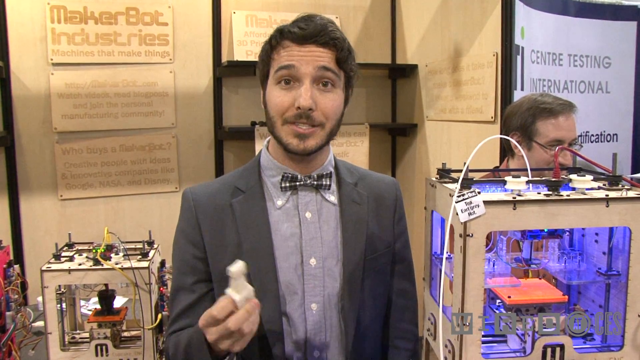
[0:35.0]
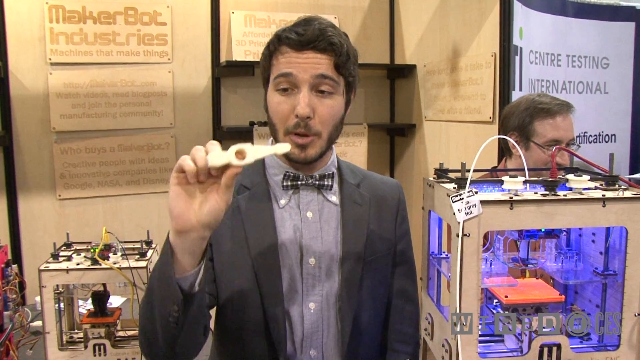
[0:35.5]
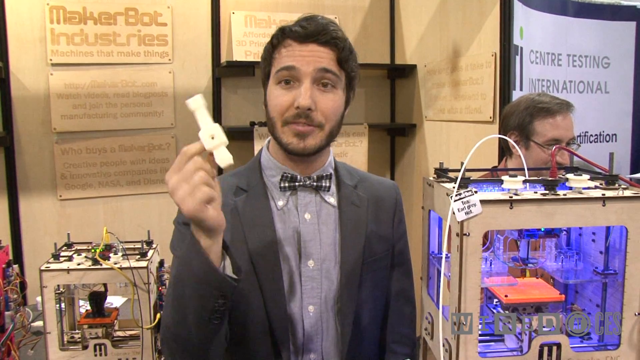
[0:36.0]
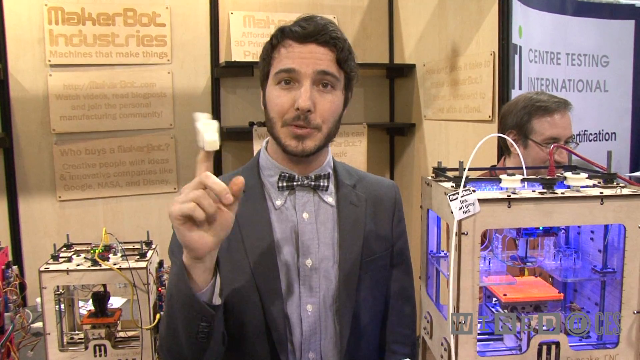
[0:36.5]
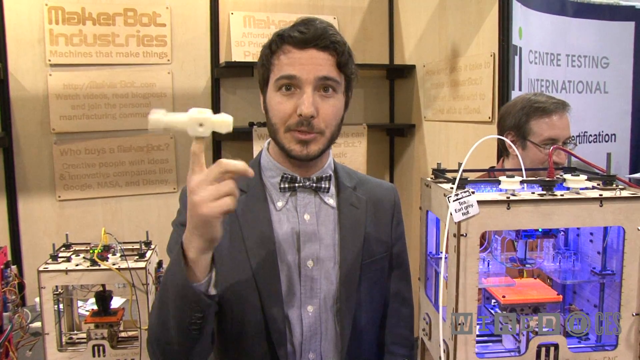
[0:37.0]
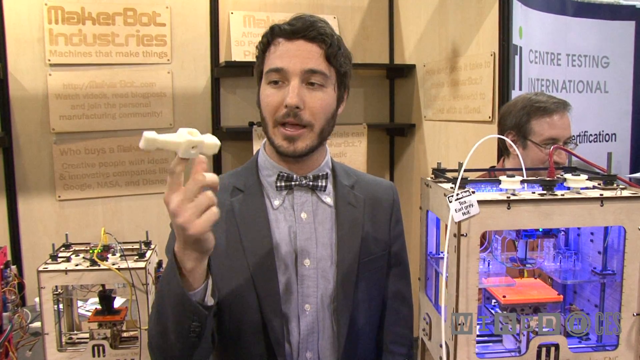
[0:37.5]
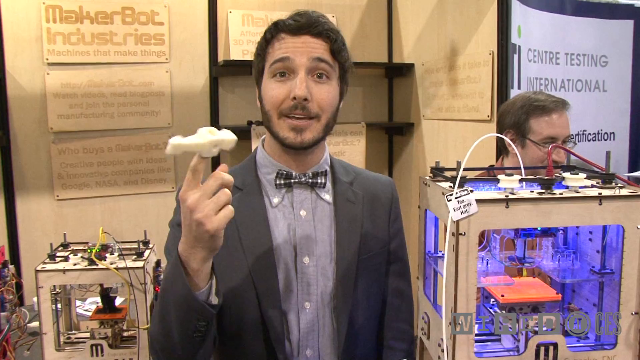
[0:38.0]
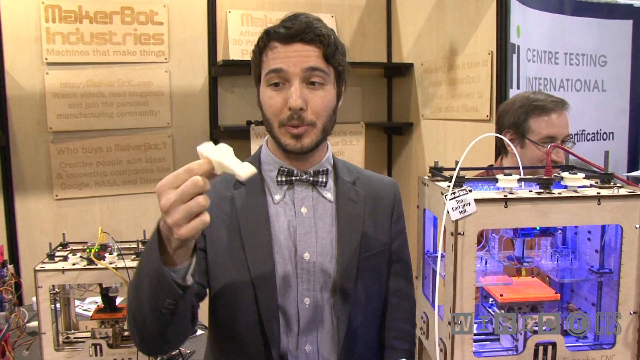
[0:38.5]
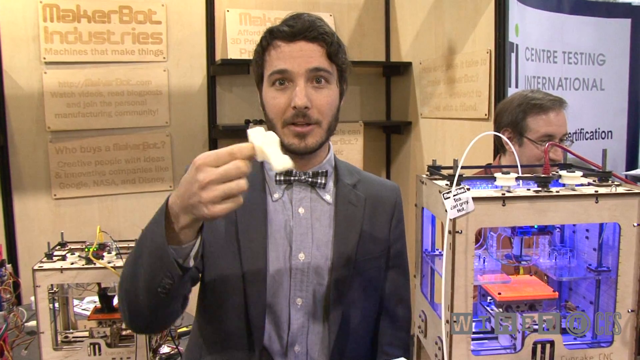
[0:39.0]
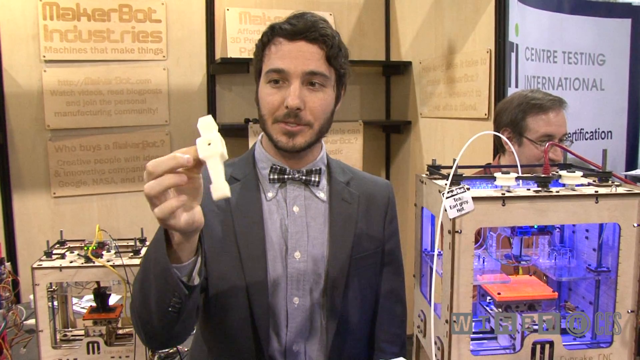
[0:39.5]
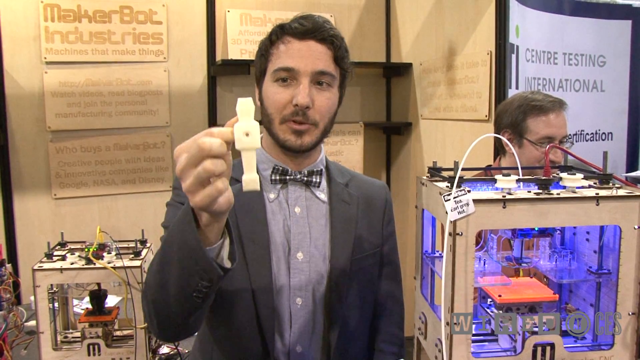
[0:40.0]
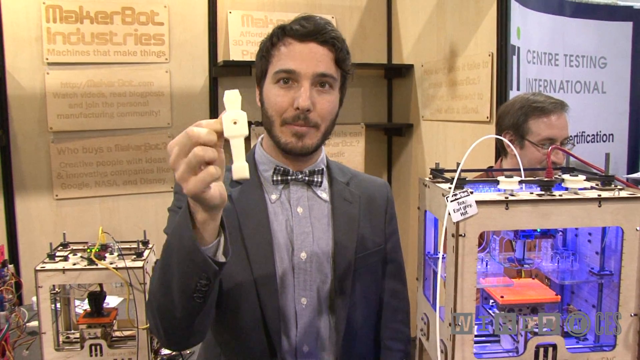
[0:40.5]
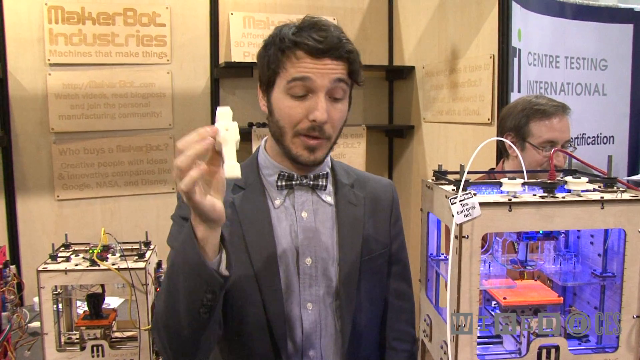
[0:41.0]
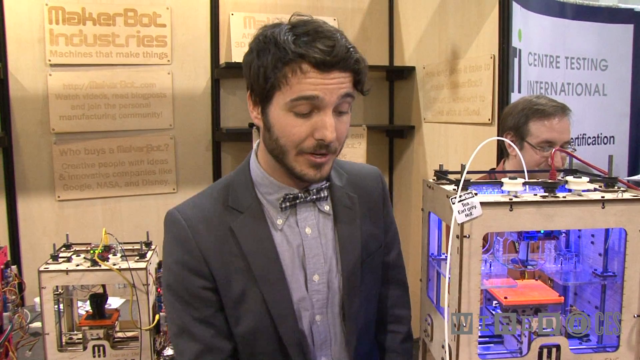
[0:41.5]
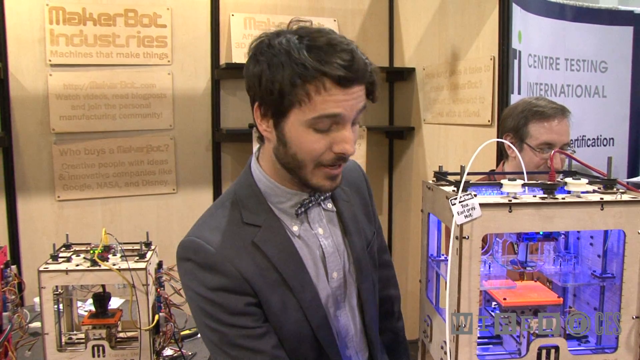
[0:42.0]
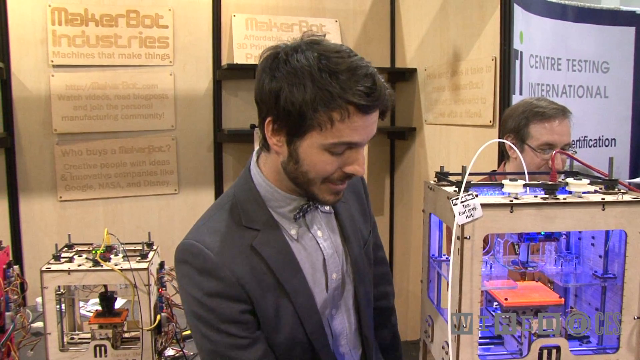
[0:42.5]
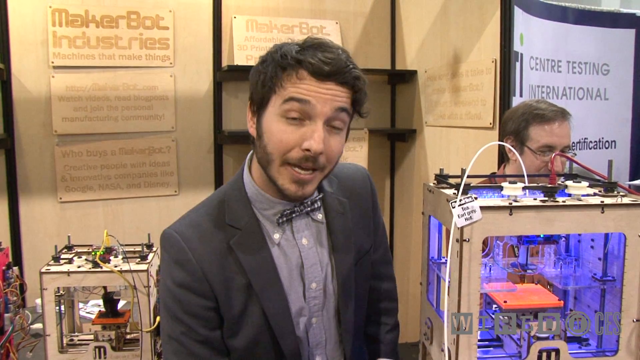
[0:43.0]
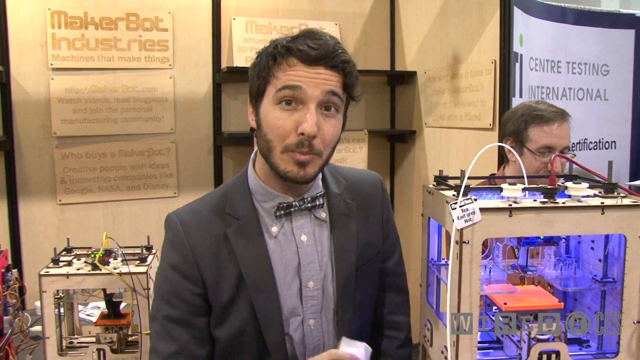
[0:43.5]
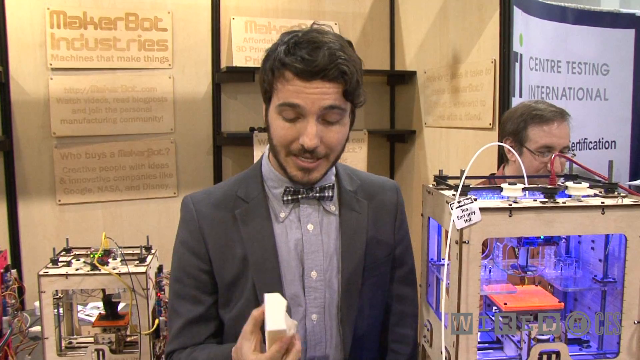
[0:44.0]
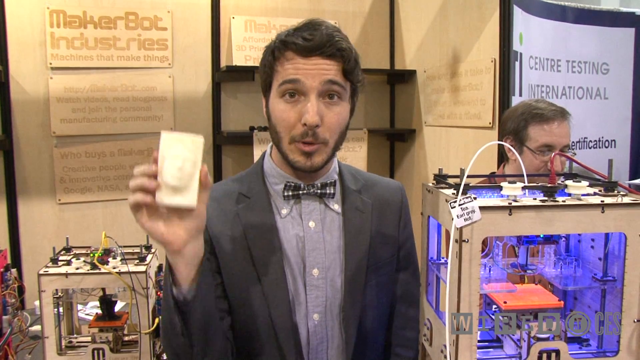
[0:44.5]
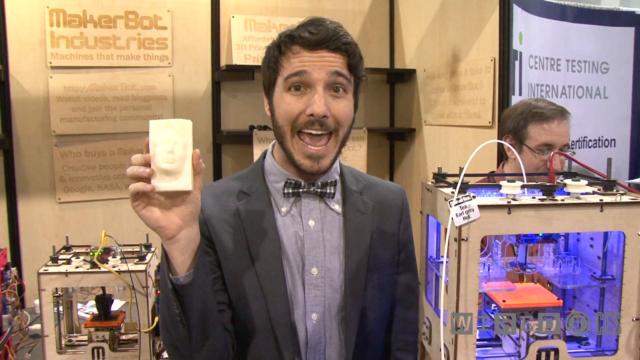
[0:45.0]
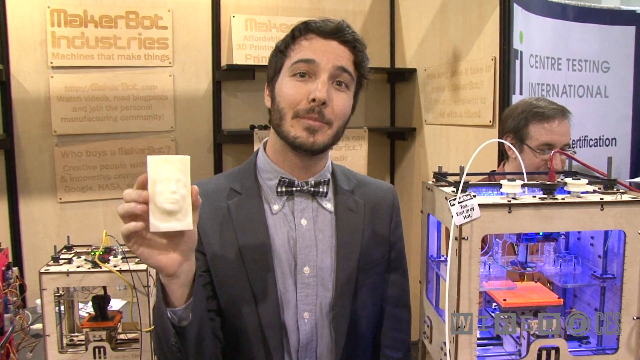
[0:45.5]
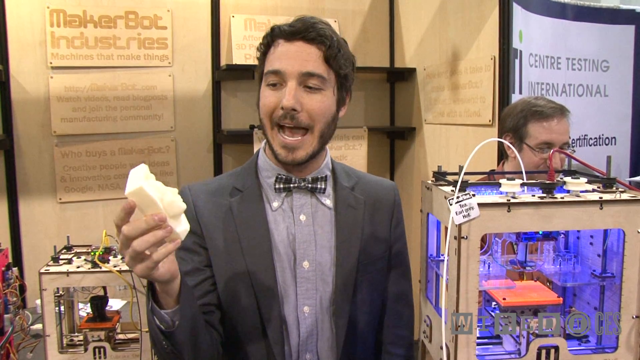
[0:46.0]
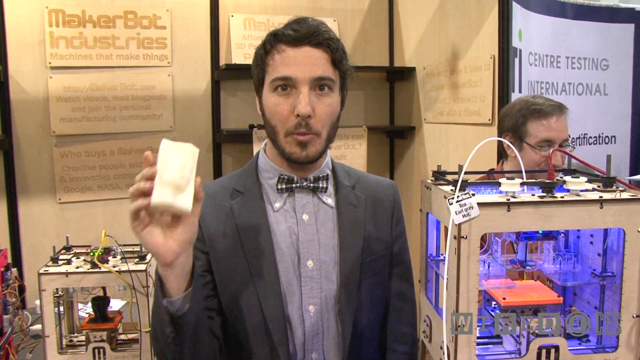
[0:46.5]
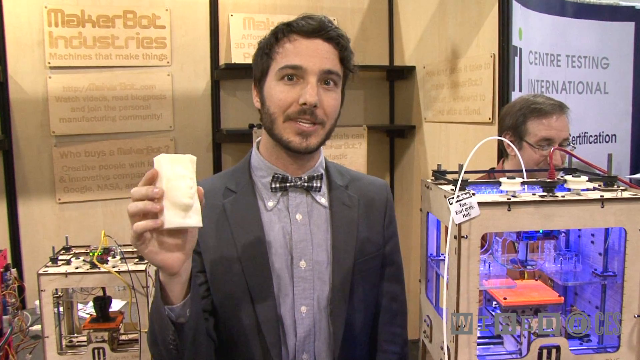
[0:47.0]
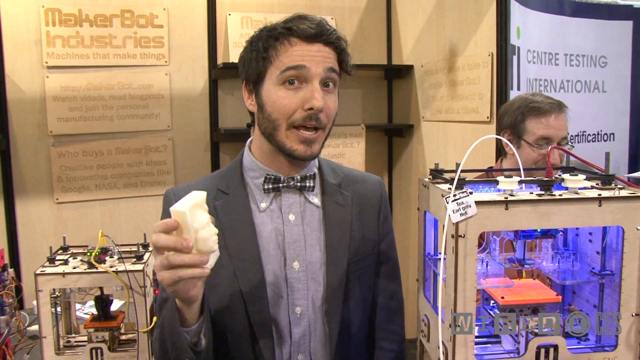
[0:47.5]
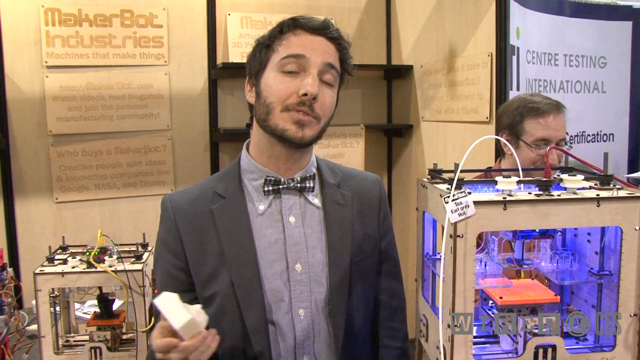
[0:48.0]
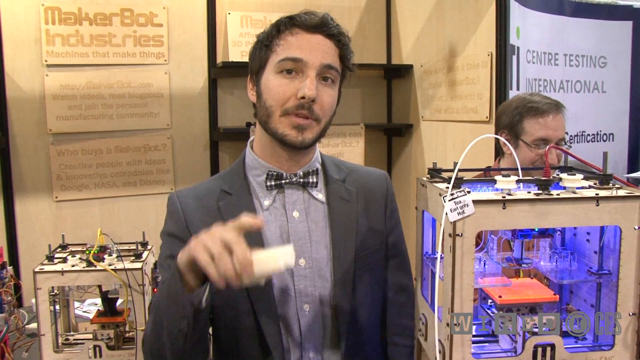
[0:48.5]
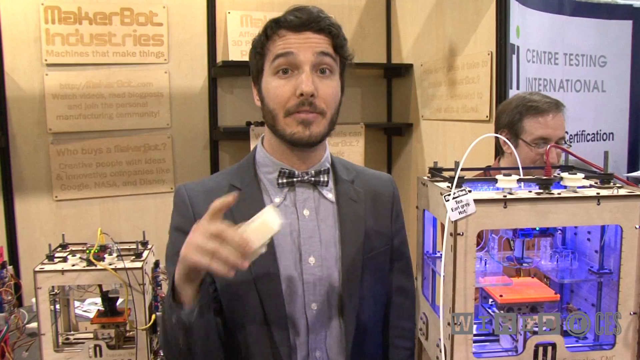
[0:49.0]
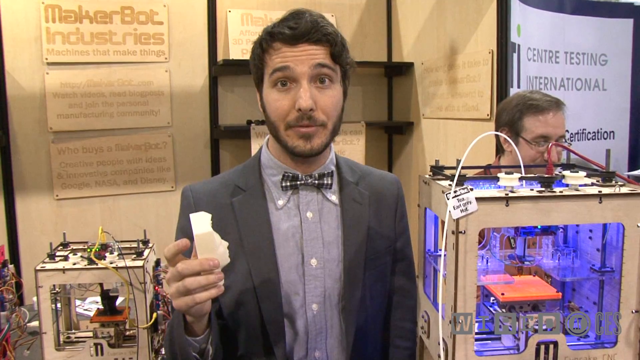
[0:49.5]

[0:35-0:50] The presenter keeps standing next to the two machines, while people in the background just stand there. He seems enthusiastic and fascinated by the objects coming out of the machine. The shapes he brings out are all white and three-dimensional: one looks almost like a hammer, and another could be a bar of soap. He appears to explain each as he goes. He has his finger through one of them, which could be some kind of contraption, possibly a fidget device.